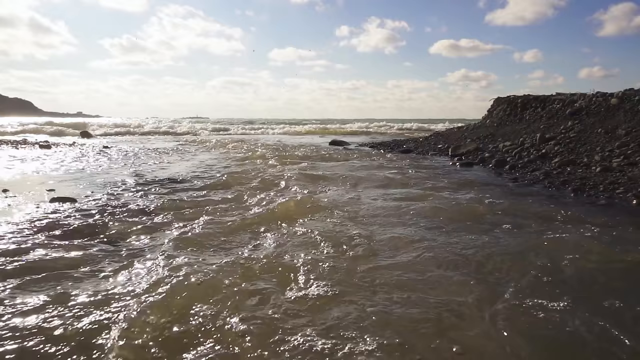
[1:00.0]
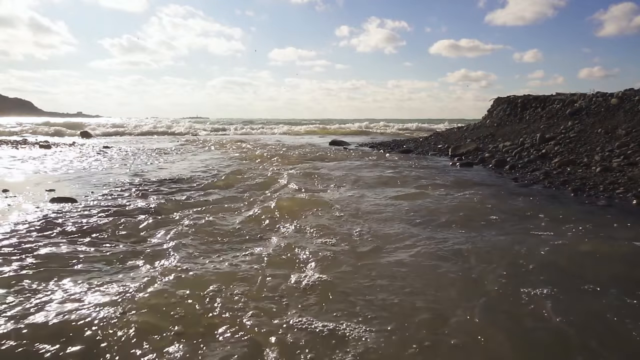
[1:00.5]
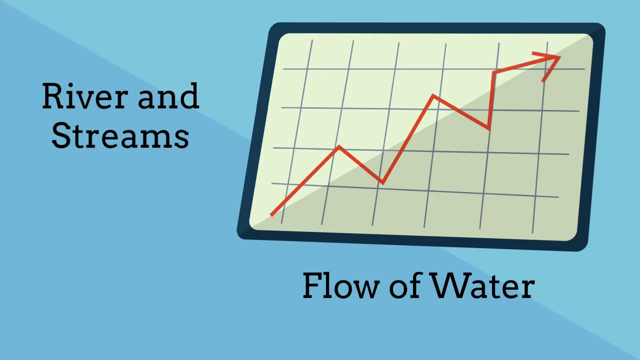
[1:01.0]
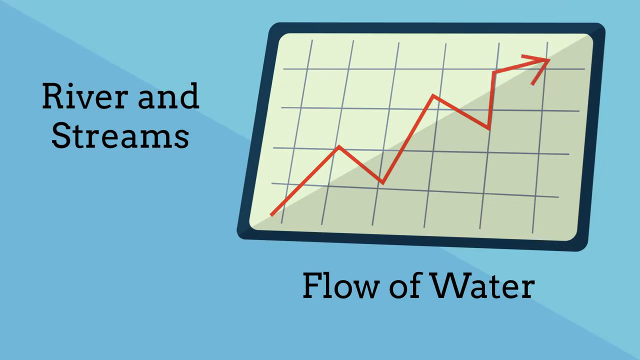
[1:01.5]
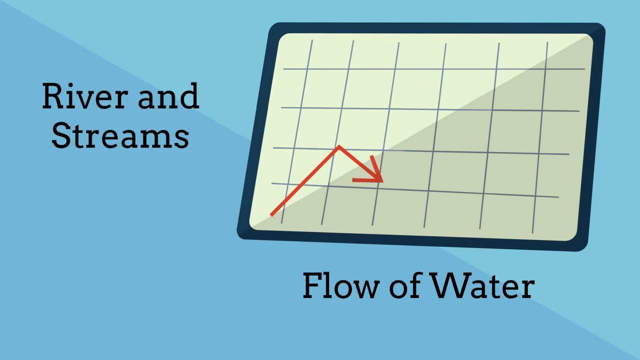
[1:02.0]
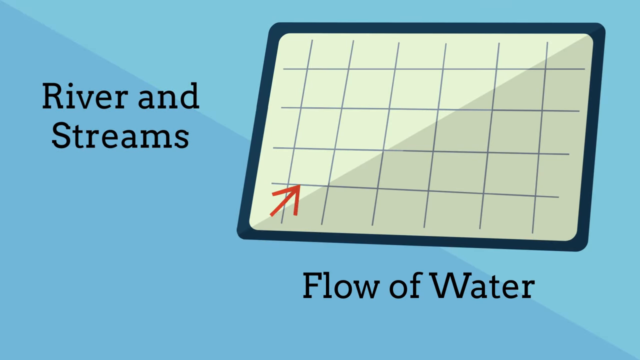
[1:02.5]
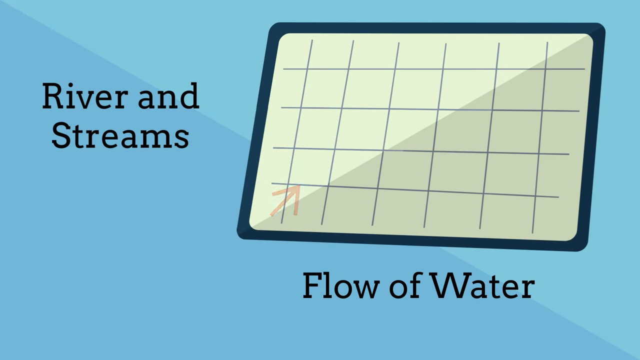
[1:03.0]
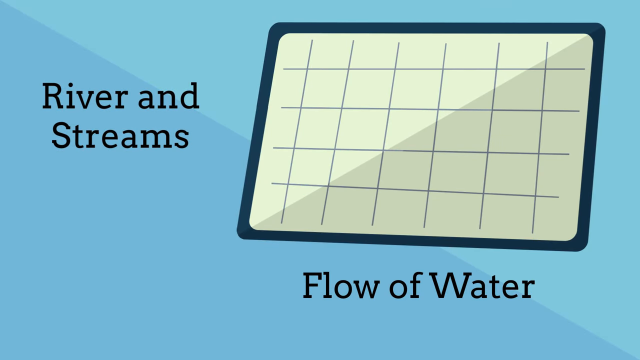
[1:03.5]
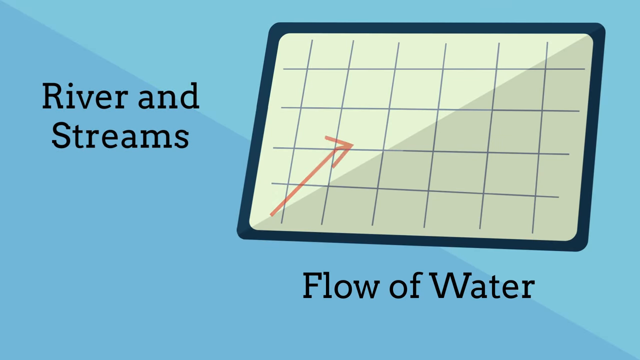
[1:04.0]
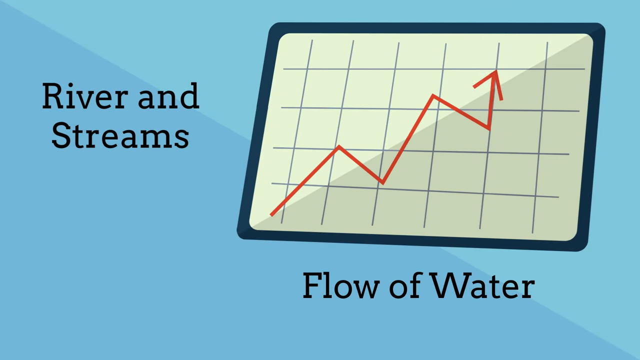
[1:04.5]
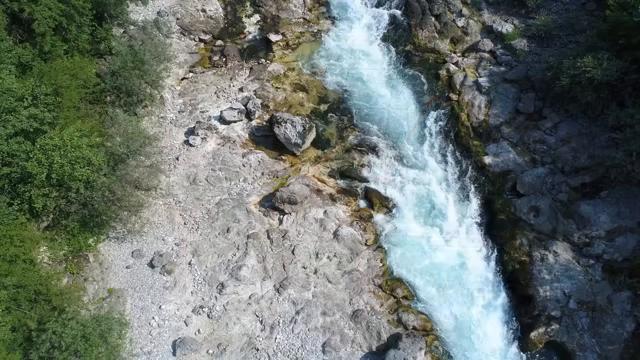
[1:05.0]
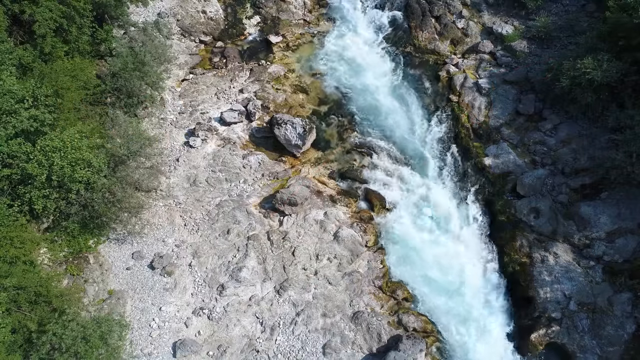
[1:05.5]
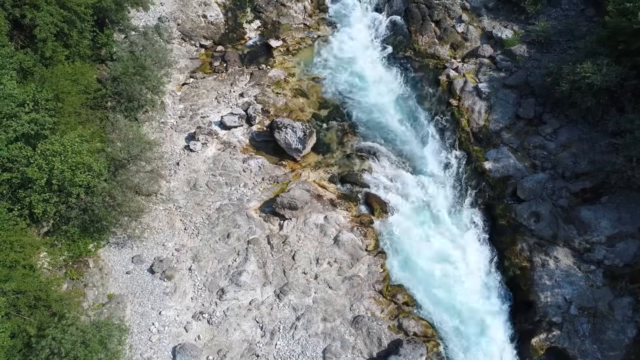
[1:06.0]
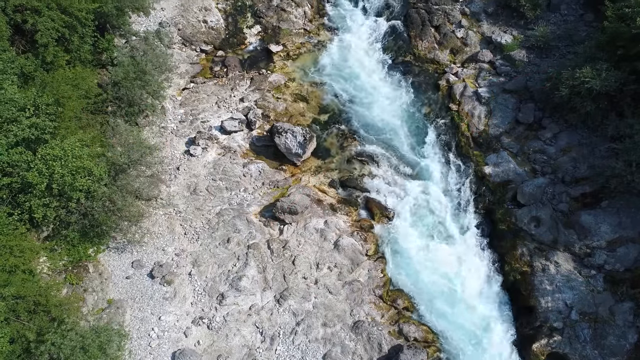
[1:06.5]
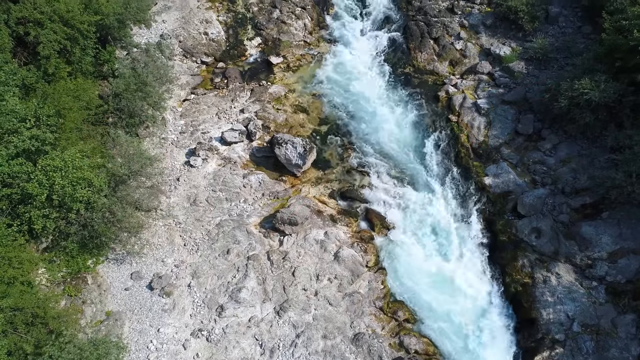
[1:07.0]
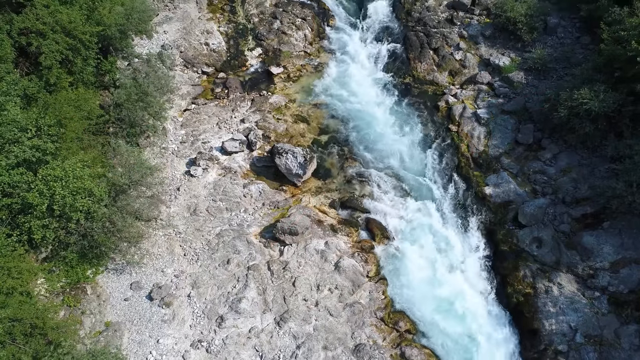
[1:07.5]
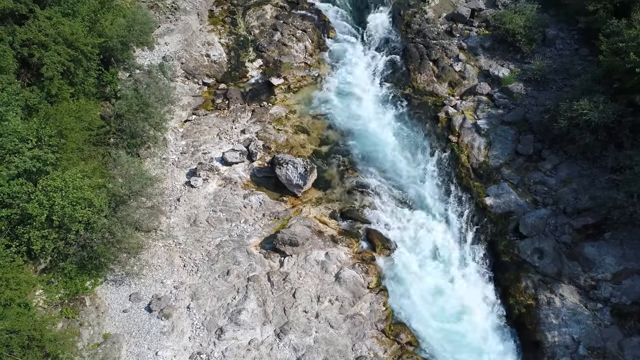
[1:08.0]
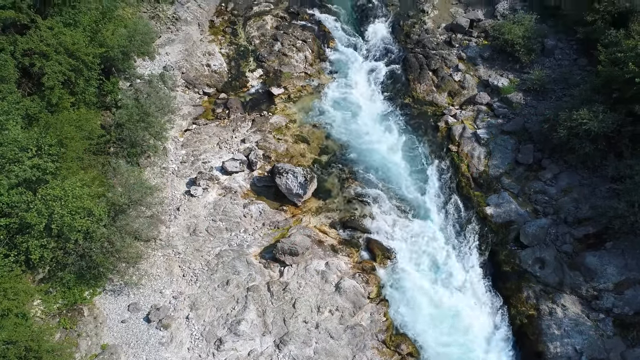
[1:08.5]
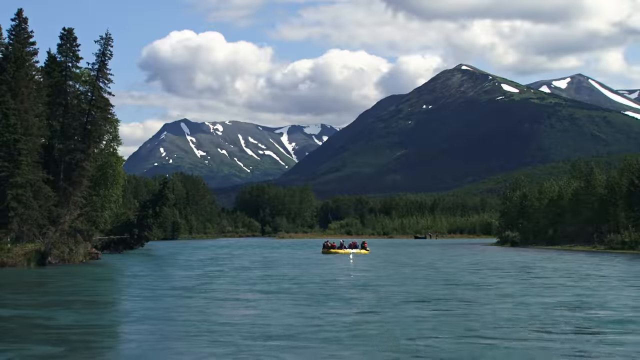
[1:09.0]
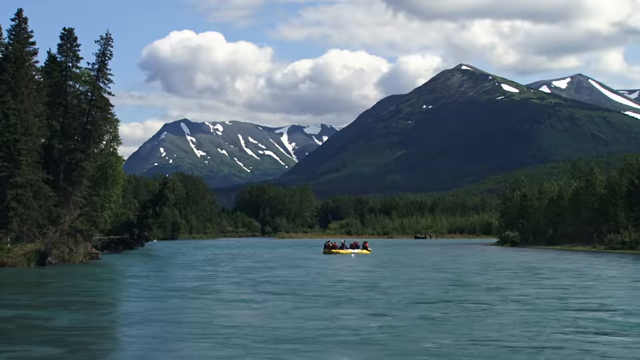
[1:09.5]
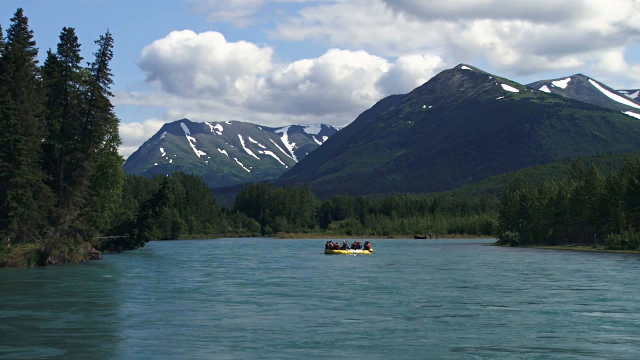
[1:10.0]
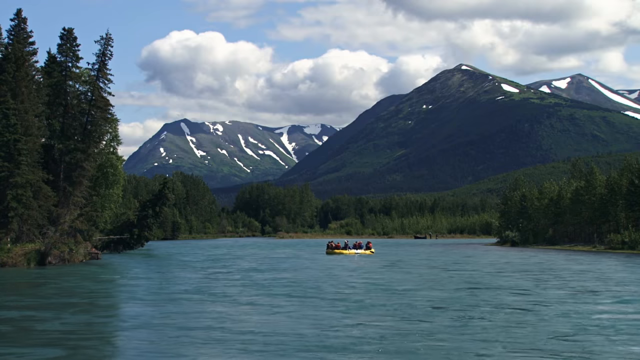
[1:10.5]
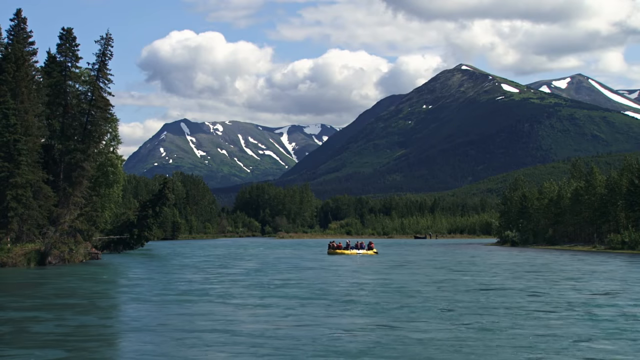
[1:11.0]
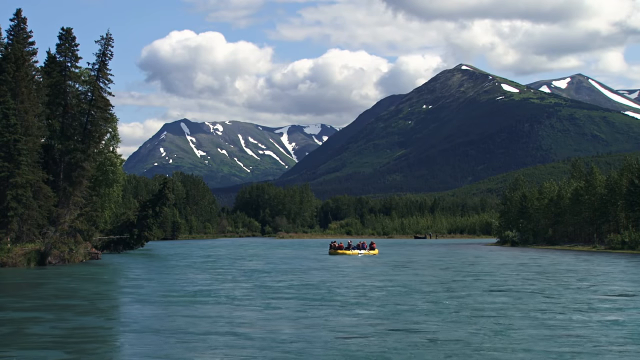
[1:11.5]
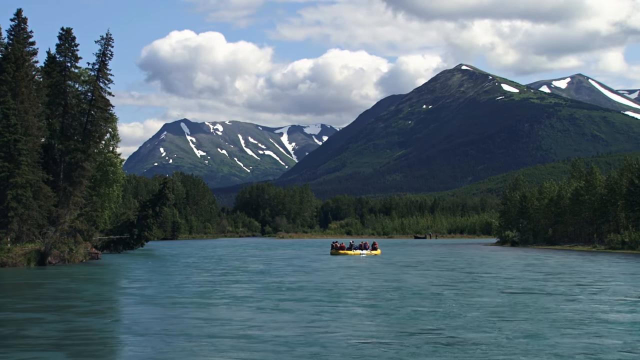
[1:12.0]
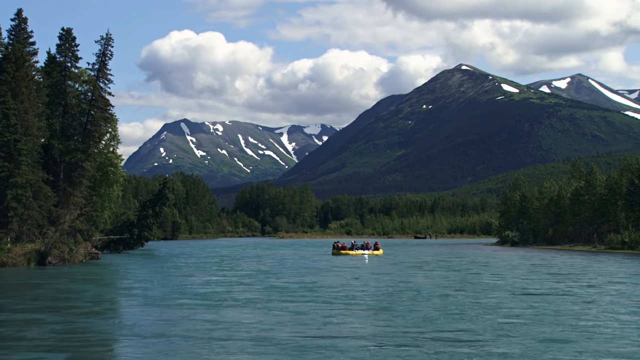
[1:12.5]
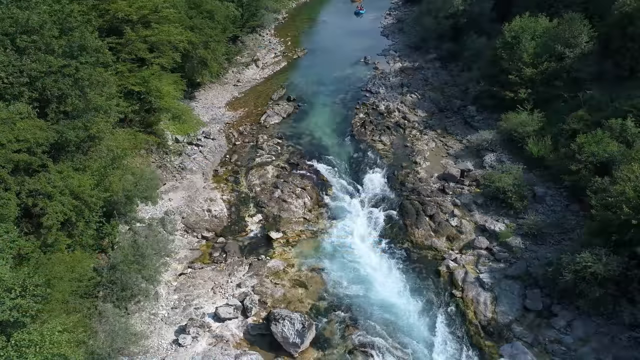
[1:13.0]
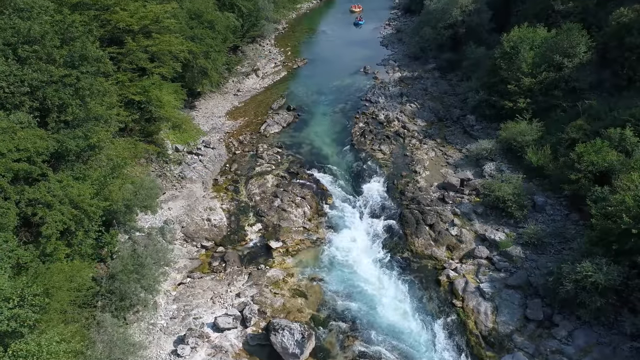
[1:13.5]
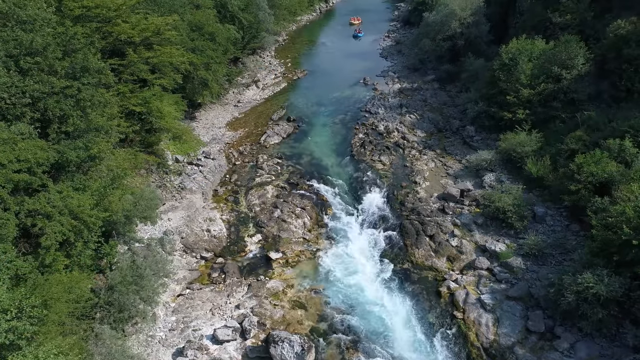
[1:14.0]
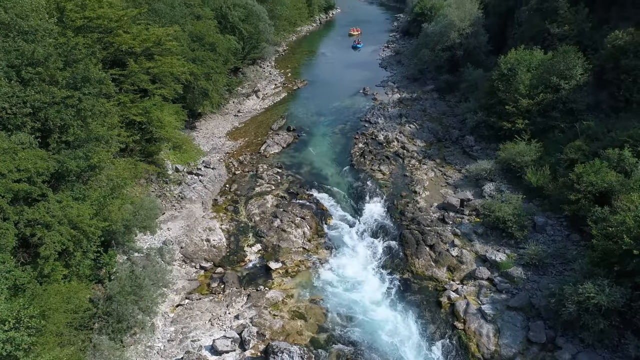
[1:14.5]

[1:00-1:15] A waterway appears with a mountainous background, and streams flow through a rocky area. The water looks very clear. Rough water runs down the river, and the whitewater looks fast and rushing. The banks have lush greenery and trees, and people float down the river. The mountains have a little snow, but it is mostly melted. Rushing water runs between high riverbanks, and a little sandy shore lines parts of the river. There are big stones and very clear water that looks cold, while the sand looks warm.